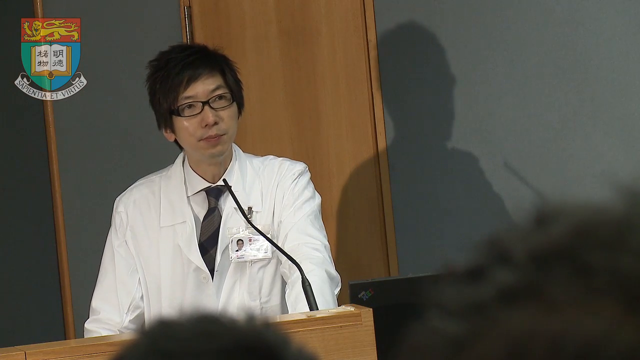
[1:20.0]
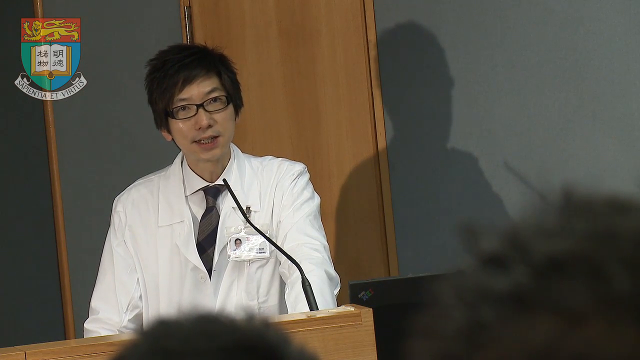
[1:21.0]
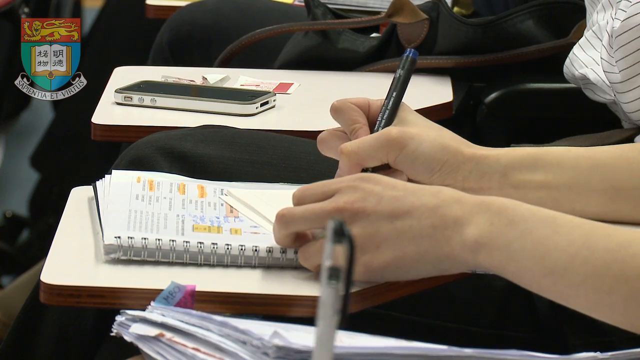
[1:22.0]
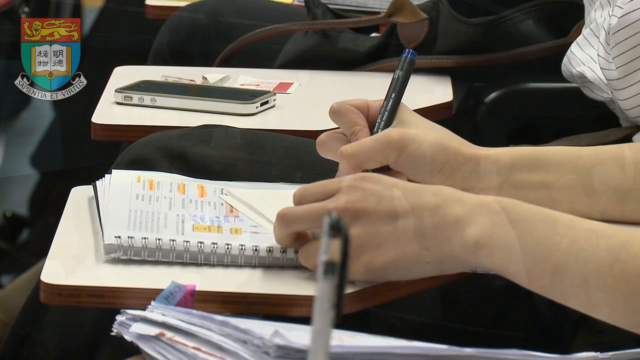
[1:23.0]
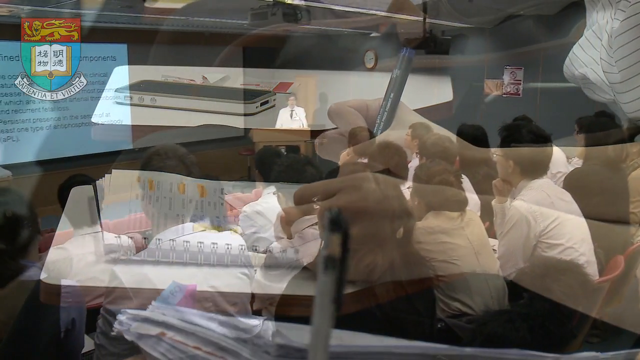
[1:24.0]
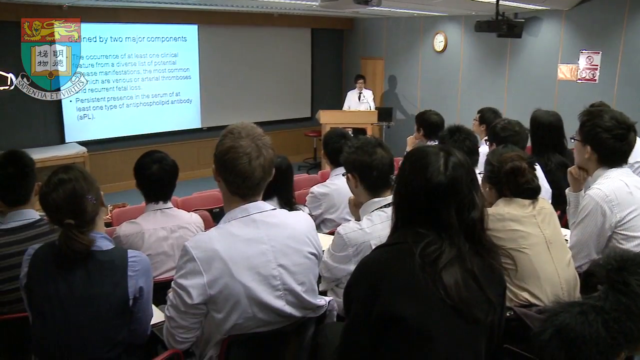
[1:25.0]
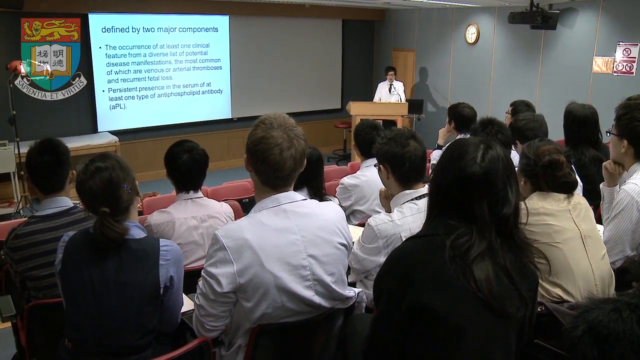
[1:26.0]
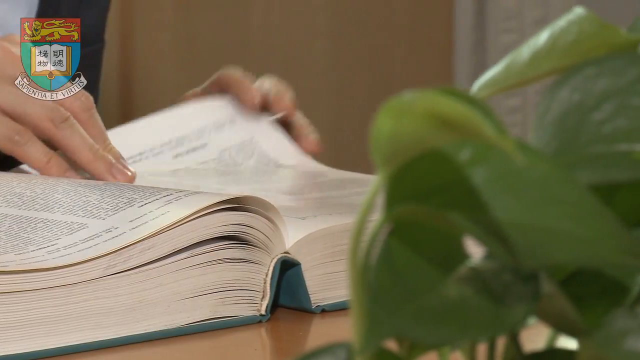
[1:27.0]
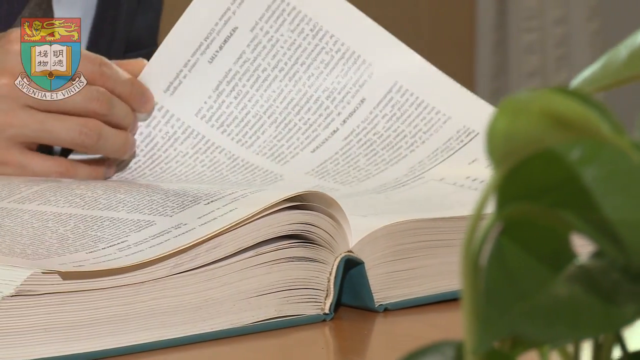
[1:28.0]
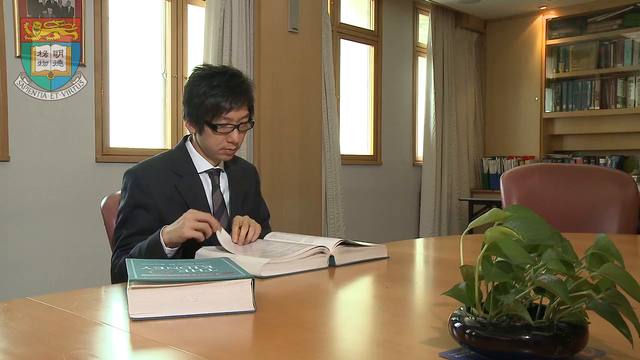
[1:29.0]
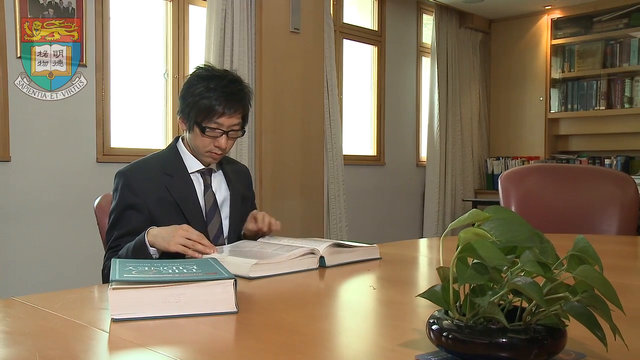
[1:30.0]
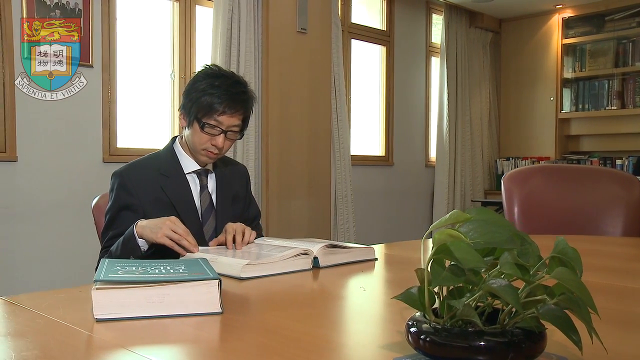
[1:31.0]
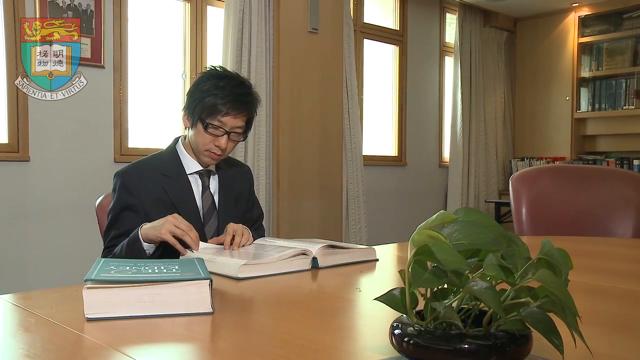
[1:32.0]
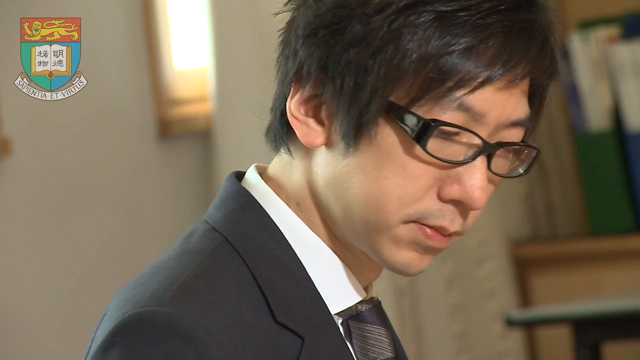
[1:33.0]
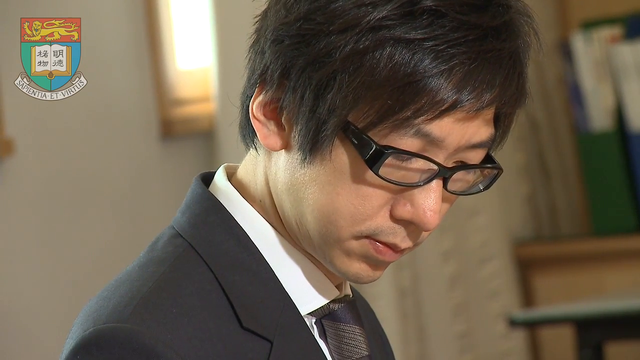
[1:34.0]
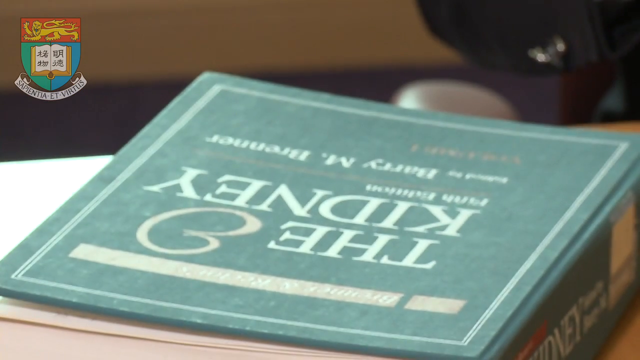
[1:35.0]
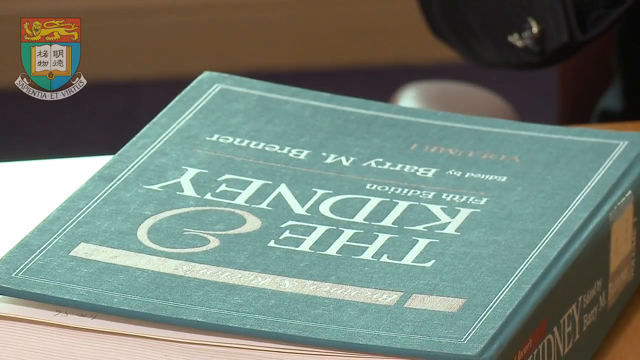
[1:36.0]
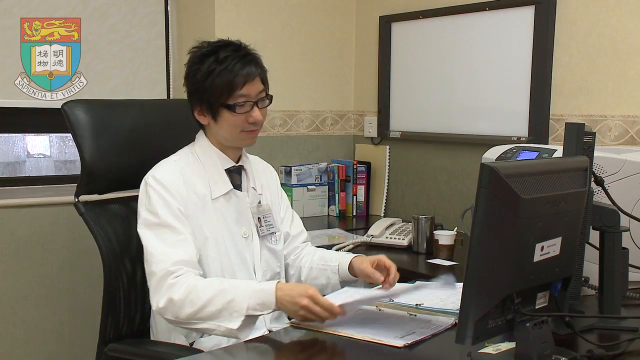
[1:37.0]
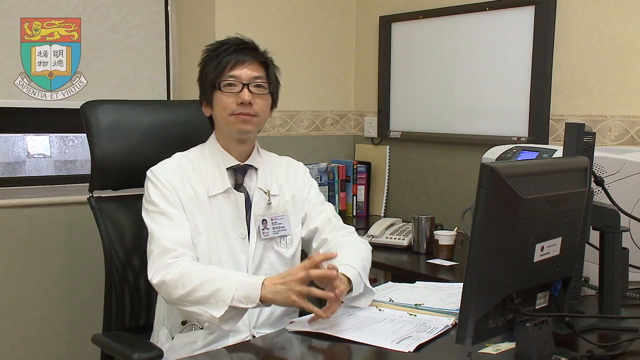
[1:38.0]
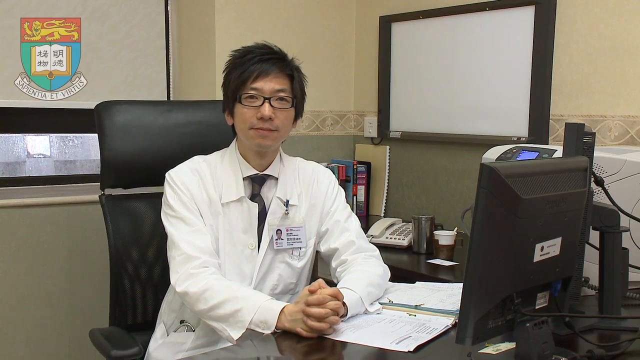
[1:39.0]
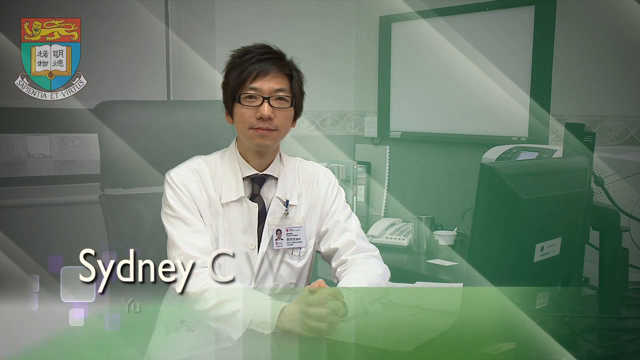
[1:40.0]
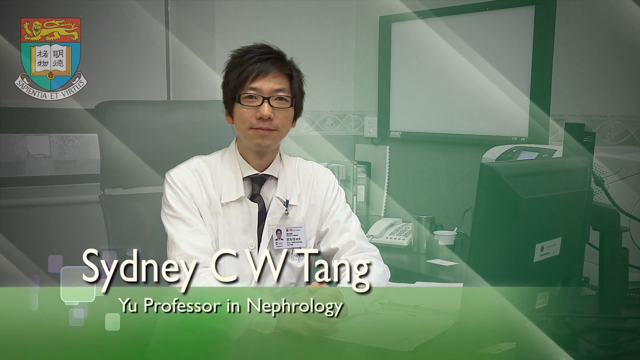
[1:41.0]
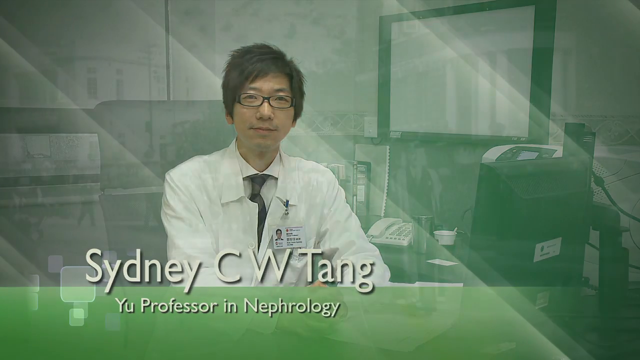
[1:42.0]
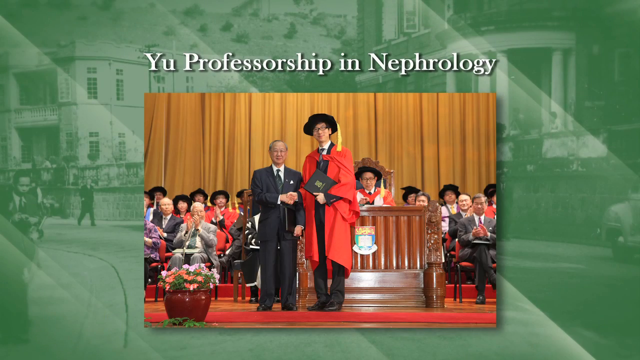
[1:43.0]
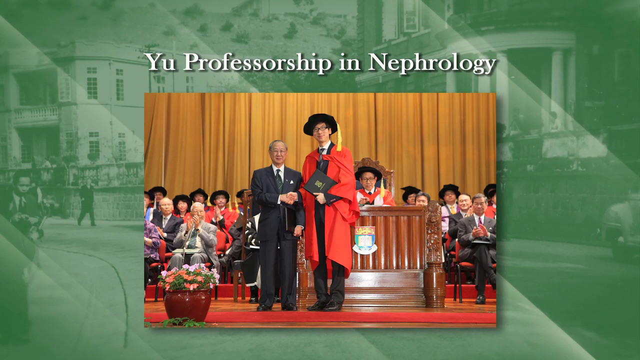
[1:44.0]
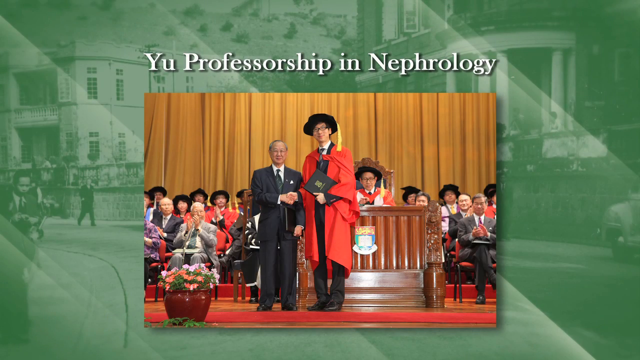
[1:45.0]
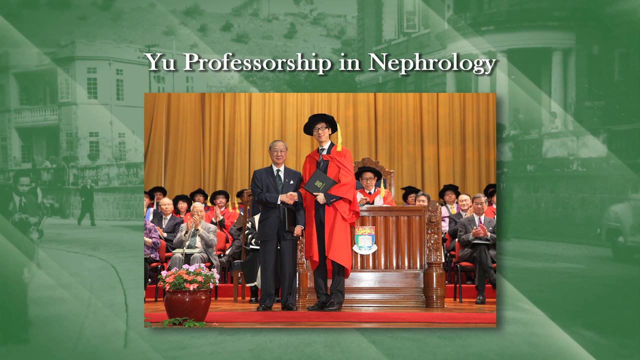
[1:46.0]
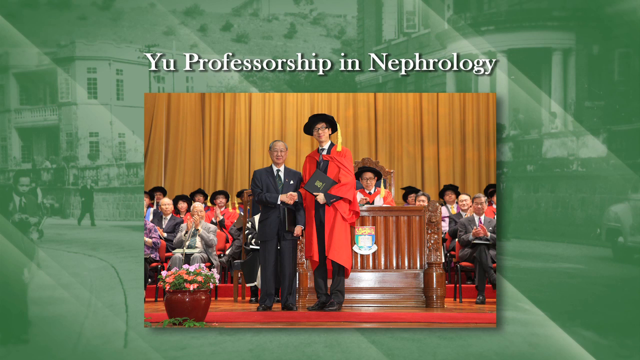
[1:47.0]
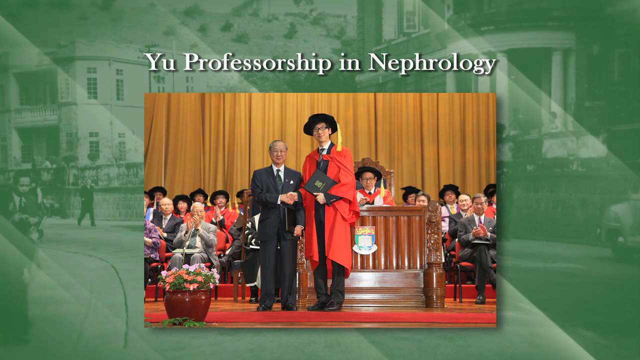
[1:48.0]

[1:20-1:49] Mr. Tang stands at a podium speaking to a group of students. The camera focuses on a close-up of students' hands and notebooks as they take notes at desks in a lecture hall, then pans out to show the backs of students sitting in the classroom listening to the lecture given by Mr. Tang, who stands at a podium in front of a projector screen. The video then cuts to Dr. Tang sitting at a wooden table looking through a textbook. The camera zooms in on the textbook, which is titled "The Kidney 5th Edition" by Barry M. Brenner; it is green and has a good number of pages. Next, Dr. Tang sits at a desk, looks directly into the camera and folds his arms on the desk, as his name is displayed as "Sidney C.W. Tang, Yu professor in Nephrology." Finally, a photograph shows Dr. Tang at what appears to be a graduation ceremony, wearing robes and a tassel and holding a diploma, standing with the man identified as Mr. Yu earlier in the video and shaking hands.